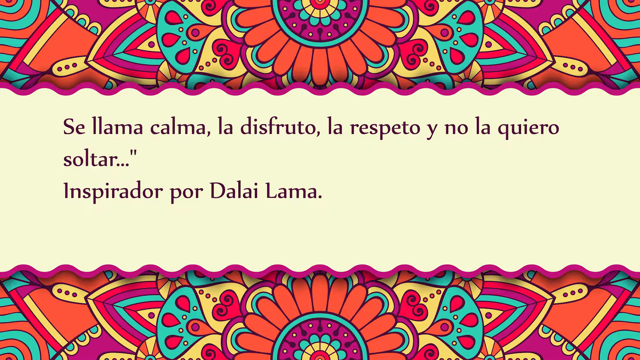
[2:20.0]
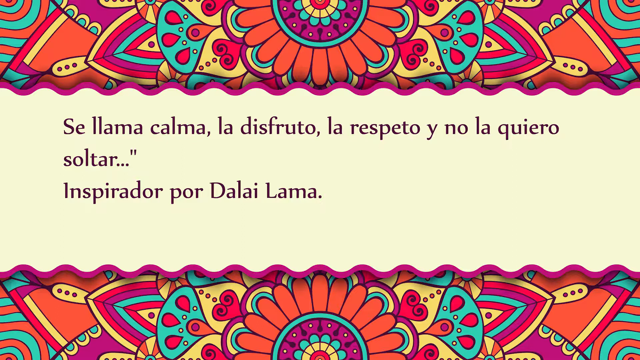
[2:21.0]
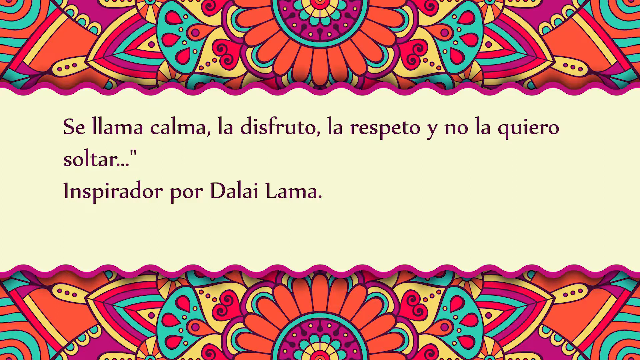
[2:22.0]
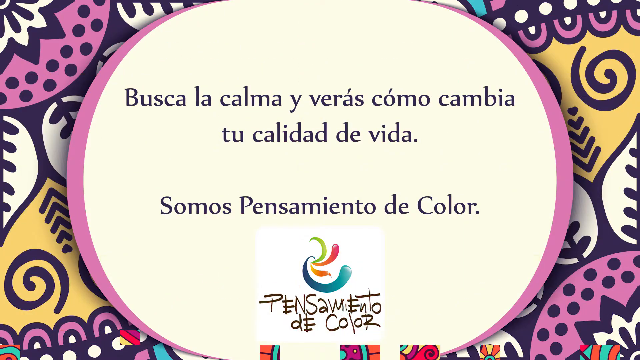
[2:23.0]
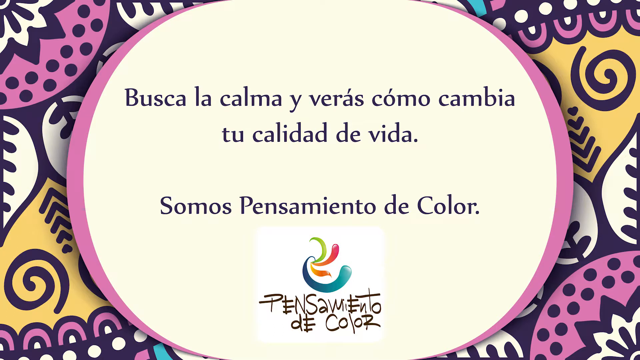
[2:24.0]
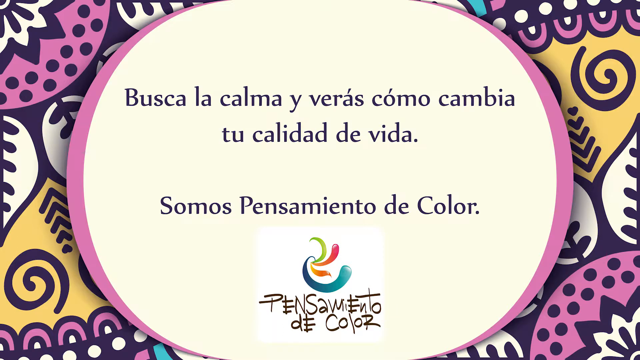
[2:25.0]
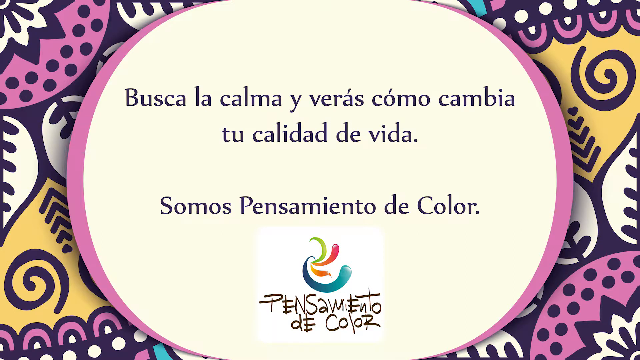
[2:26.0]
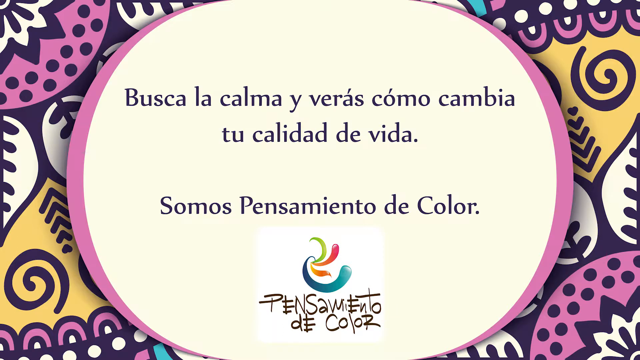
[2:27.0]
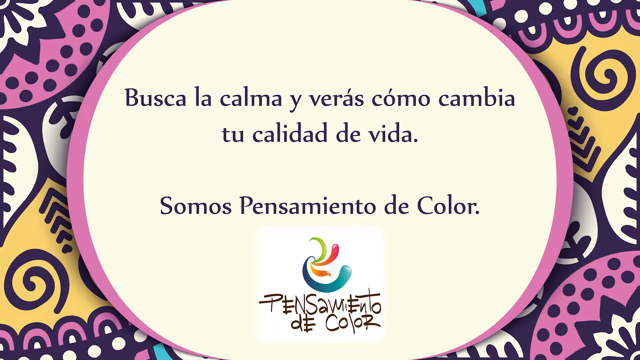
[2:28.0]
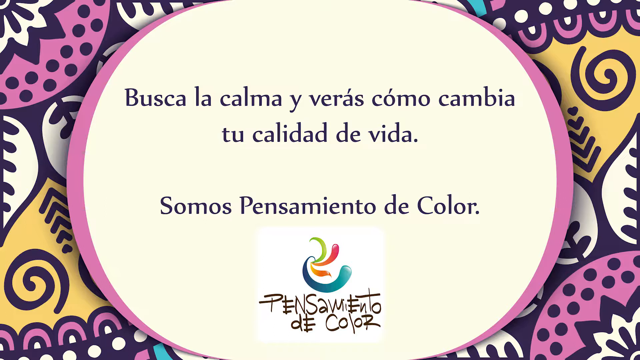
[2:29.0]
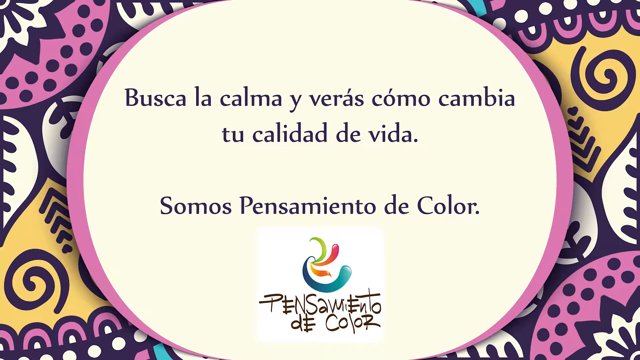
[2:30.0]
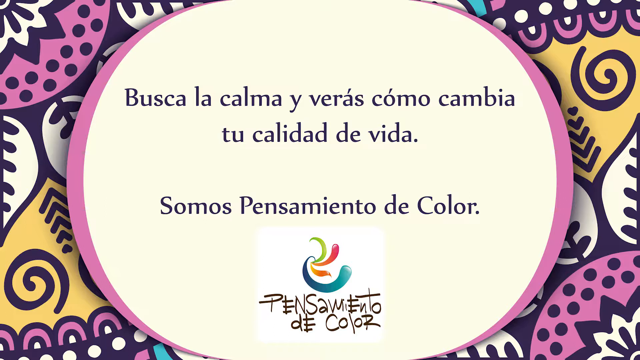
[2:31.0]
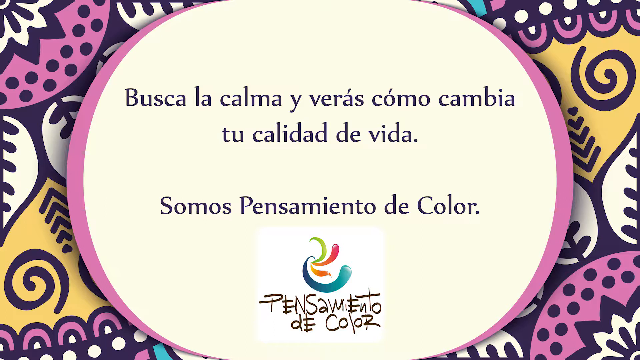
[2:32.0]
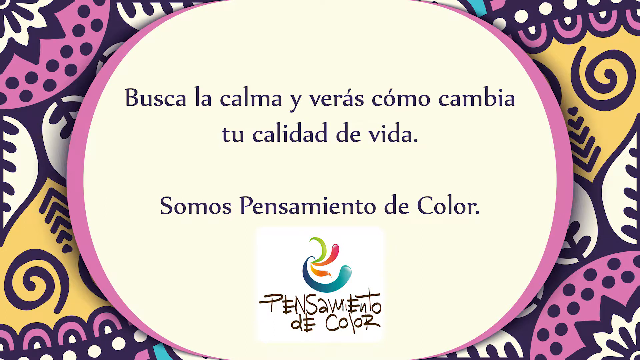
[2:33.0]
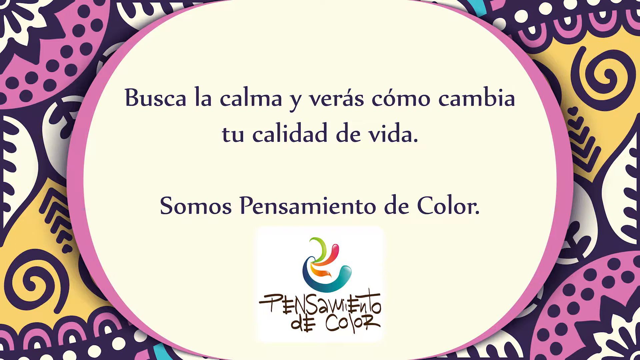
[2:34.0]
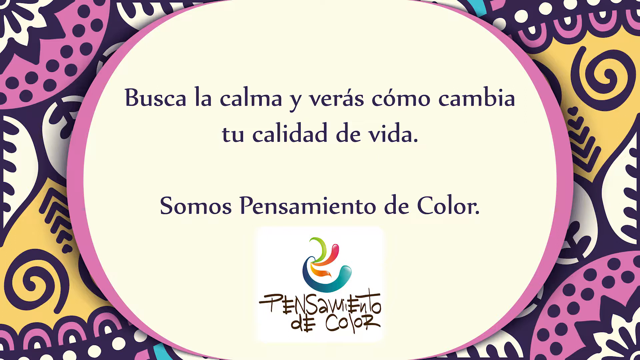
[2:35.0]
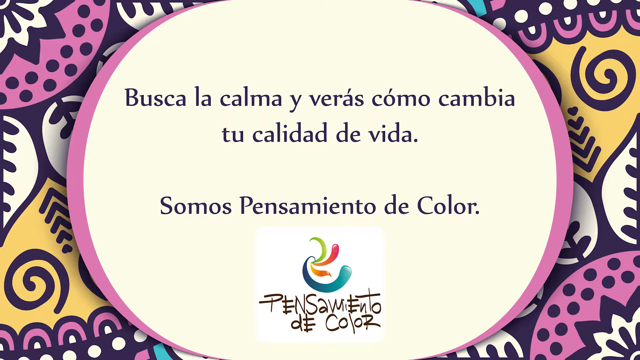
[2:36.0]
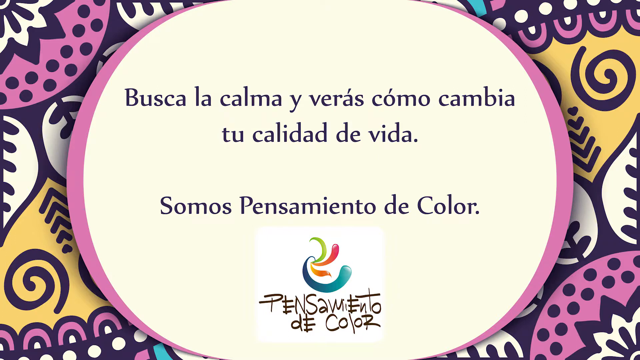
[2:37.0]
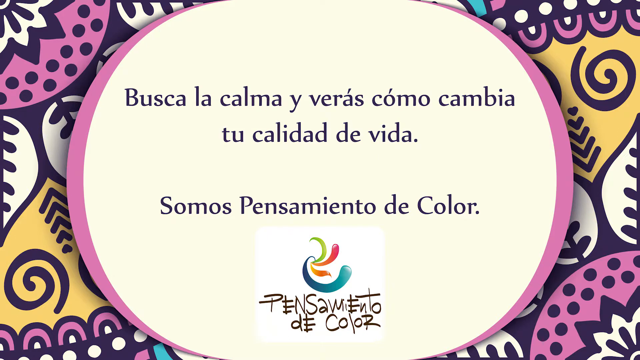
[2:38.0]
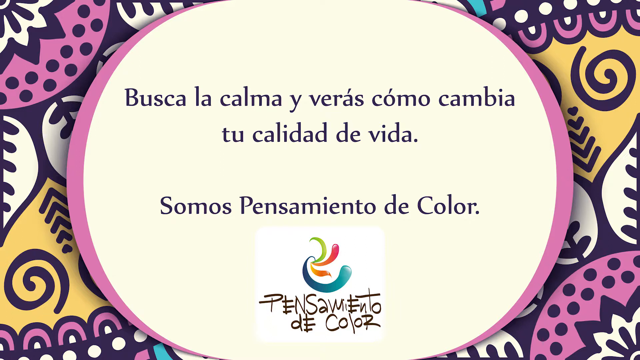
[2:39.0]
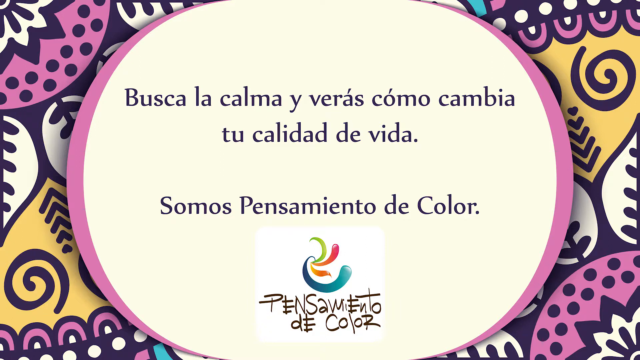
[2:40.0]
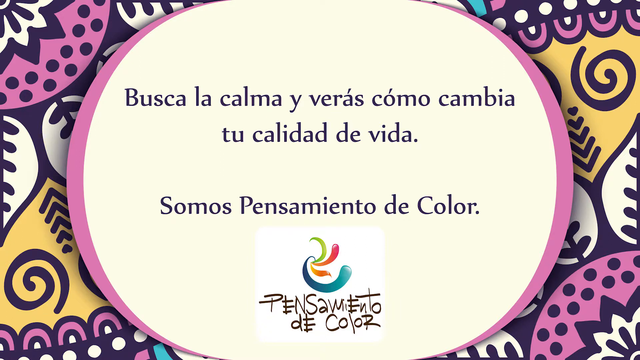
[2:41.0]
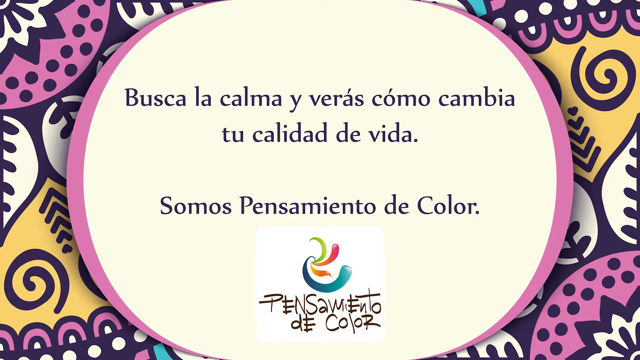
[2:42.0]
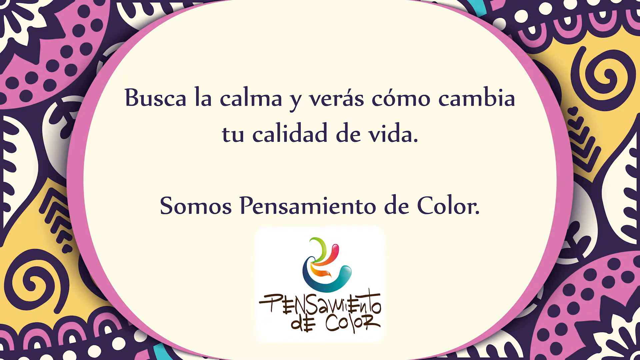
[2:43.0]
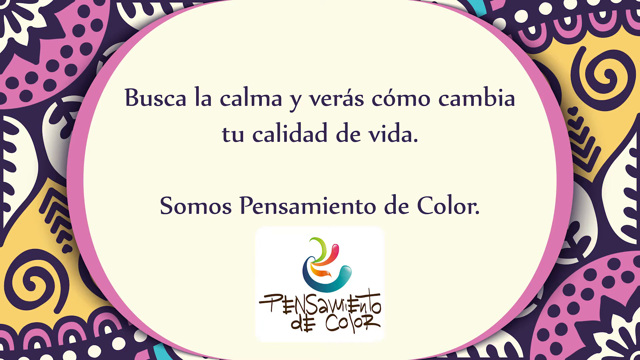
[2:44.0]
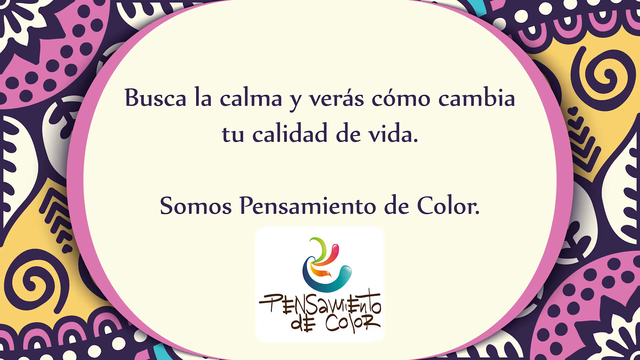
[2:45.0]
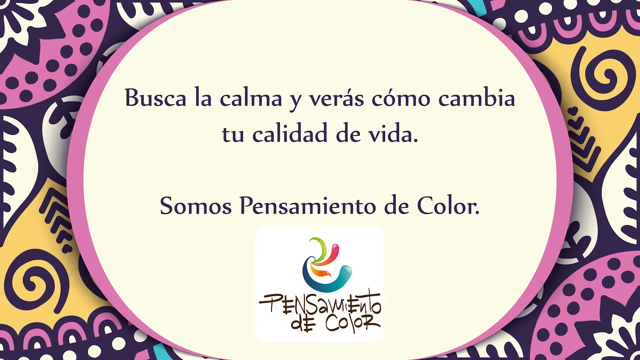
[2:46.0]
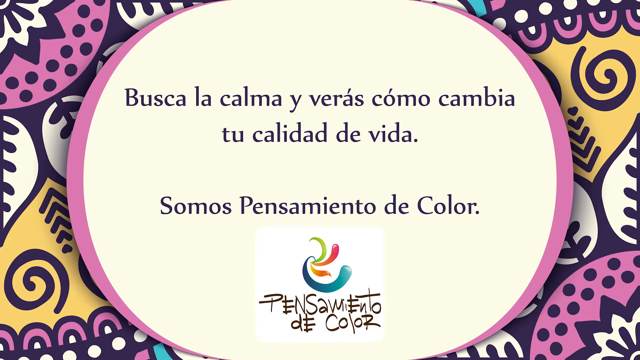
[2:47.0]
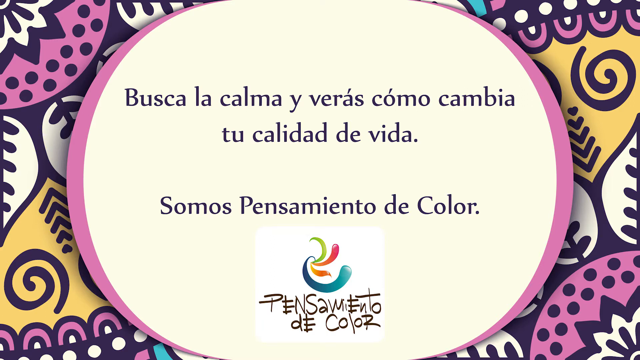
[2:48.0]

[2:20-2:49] The image dissolves from the top to show more text in Spanish and the logo seen at the beginning. On a white square is a swirl or swoosh line in green, red, a small orange and a big blue, with the name of the organization. The white circle is outlined in pink. On each side are similar patterns: something yellow with a swirl line and a series of arrows inside, and black dots over a sliver of a circle, with many different patterns outlined in black. The colors are more muted, almost pink, purple and mustard yellow. The screen then stays for quite a while with nothing changing, and no further changes to the text.